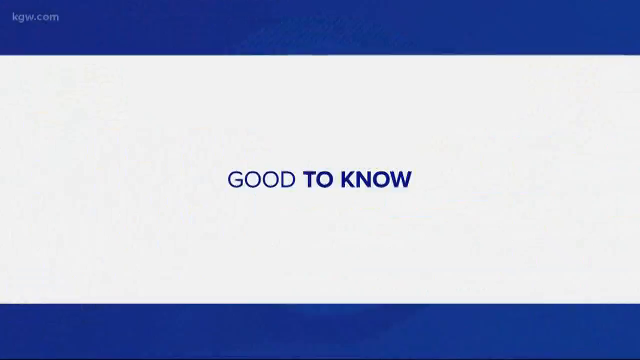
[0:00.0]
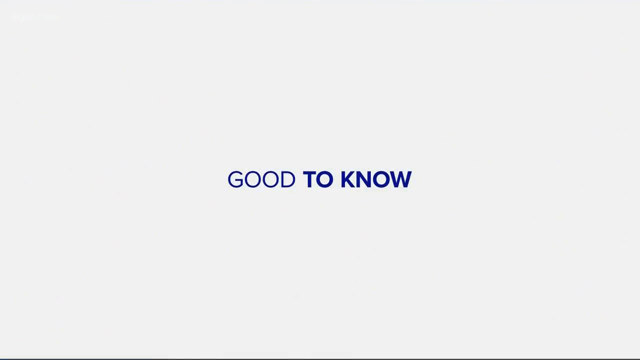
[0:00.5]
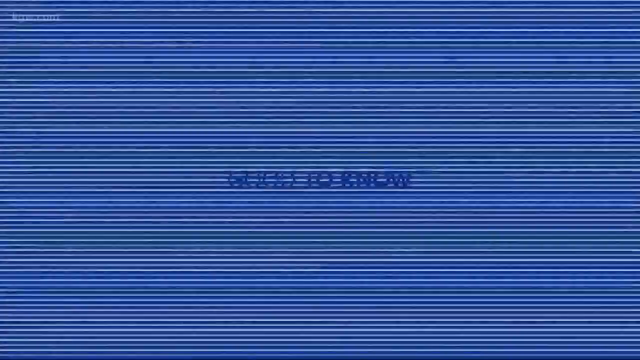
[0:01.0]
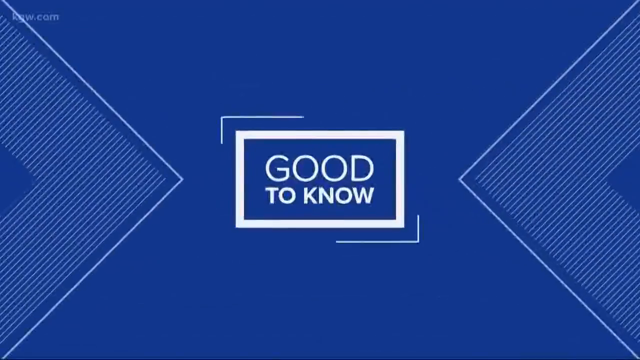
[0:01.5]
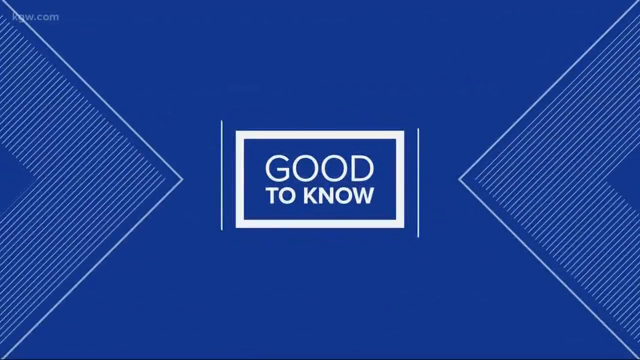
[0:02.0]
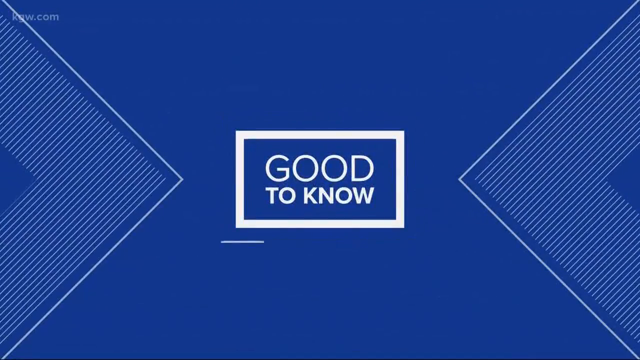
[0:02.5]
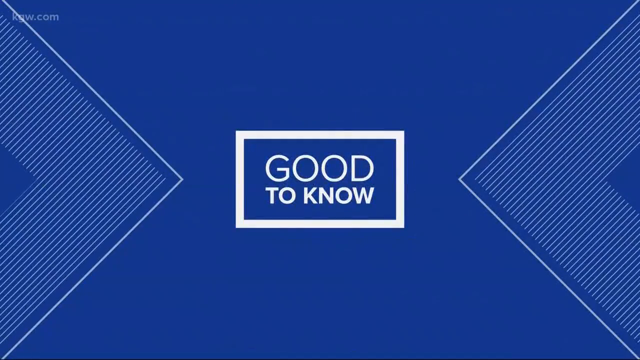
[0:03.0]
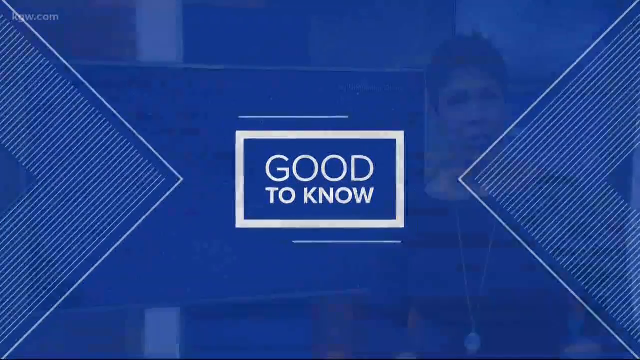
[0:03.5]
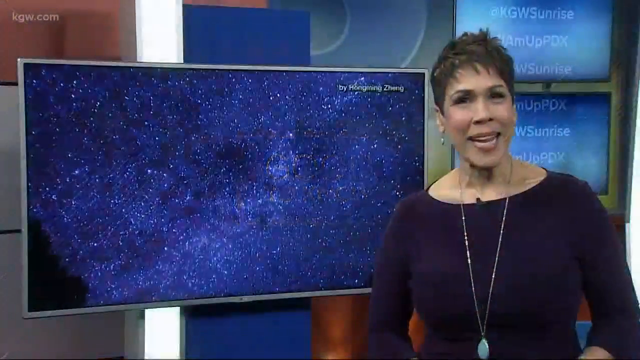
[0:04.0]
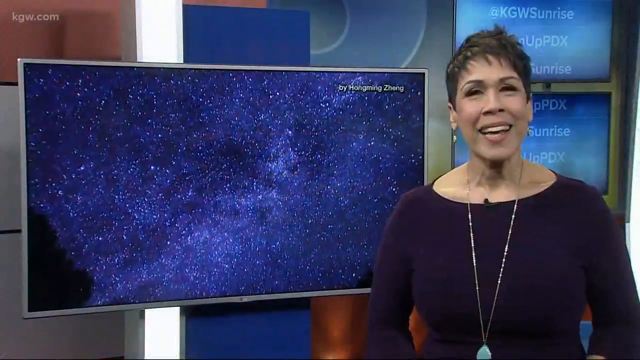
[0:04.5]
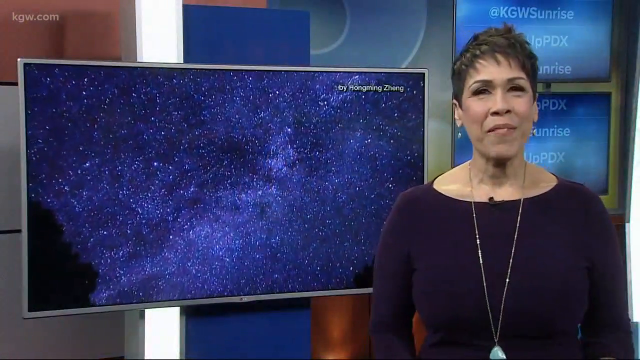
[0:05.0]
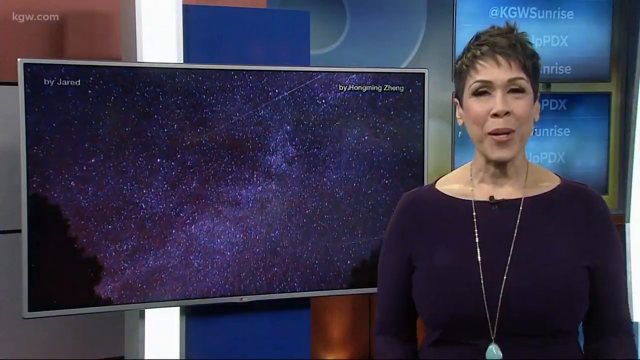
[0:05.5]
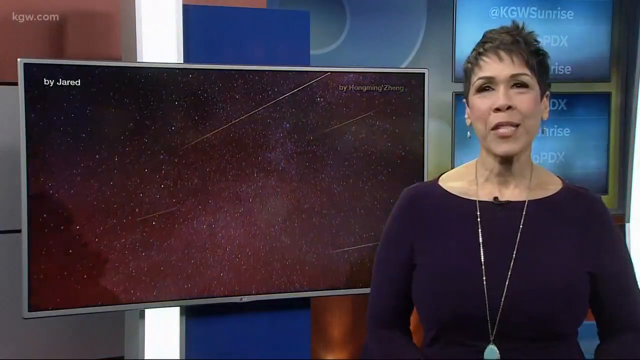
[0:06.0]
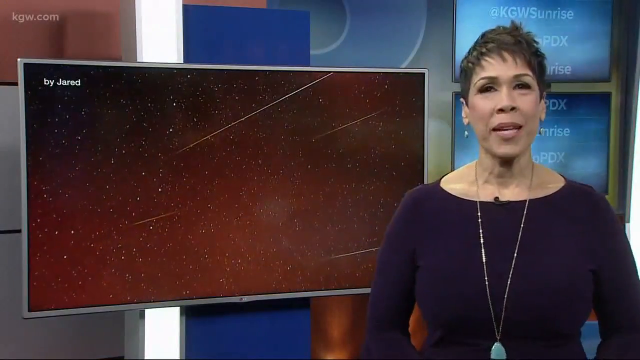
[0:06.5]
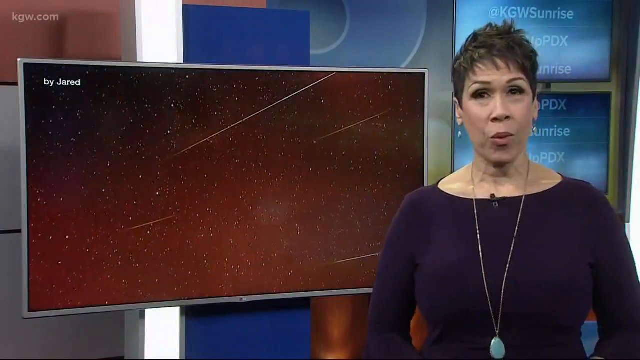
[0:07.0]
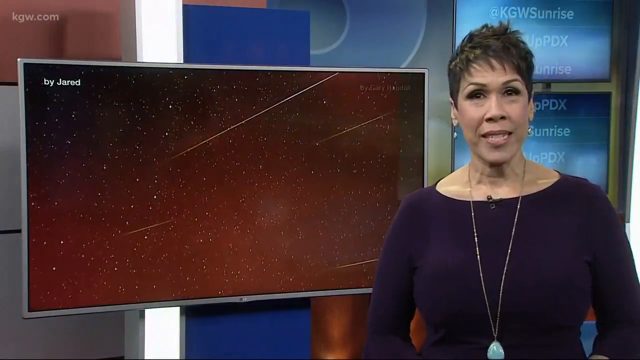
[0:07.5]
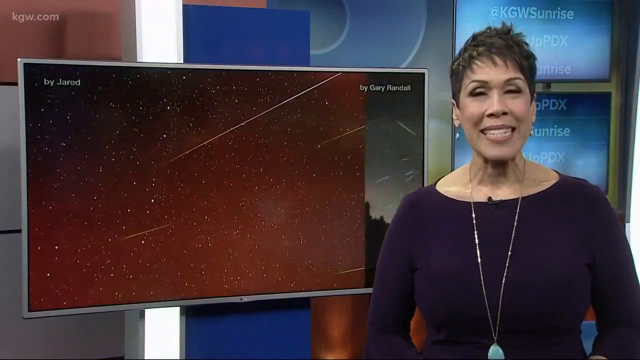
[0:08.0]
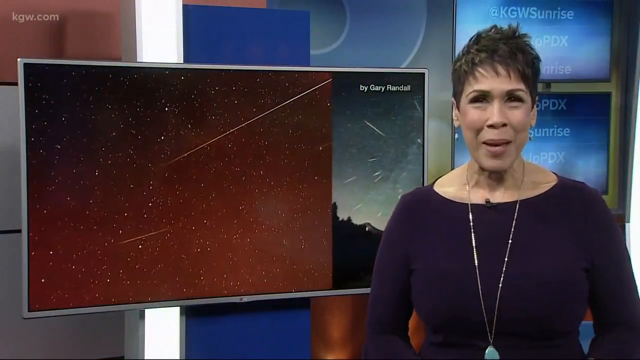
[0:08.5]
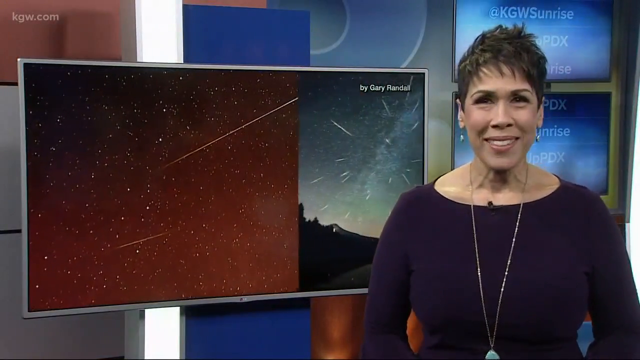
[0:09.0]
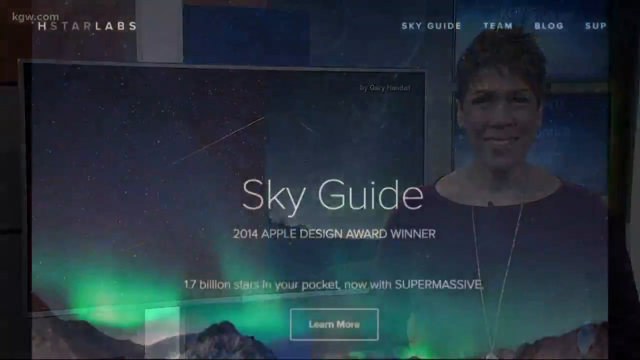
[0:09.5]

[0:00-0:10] A blue bar runs horizontally along the top and another along the bottom, each covering perhaps a sixth of the screen, and the remaining four sixths form a white background across the center. Right across the middle is the text "good to know", with "good" in a thinner font than "to know". In the top left corner are some letters that appear to be "kgw.com". Next comes a blue background with two triangles on either side, pointing from the bottom and the top and reaching a point about a third of the way in, the same on the other side. This has a white triangle, and horizontal lines form an inset, leaving a very small unlined blue triangle in the middle of that box. In the middle of this central section is a white rectangular border with the text "good to know" in white font inside it, on the blue background. The scene then moves to a studio, where a woman speaks to the camera; she stands on the right side of the screen.